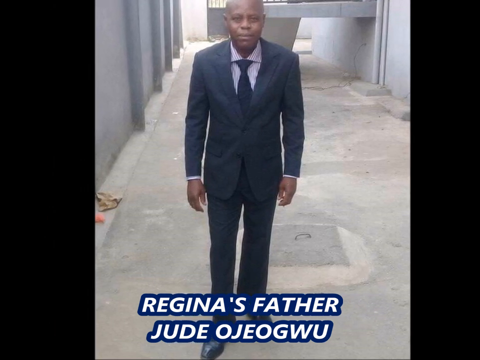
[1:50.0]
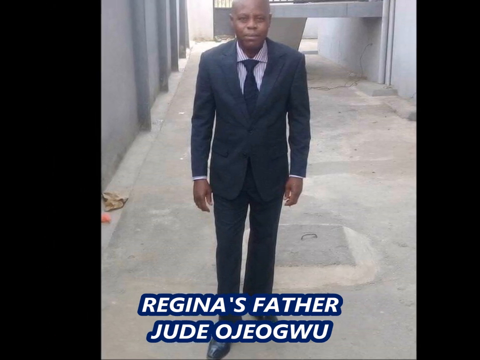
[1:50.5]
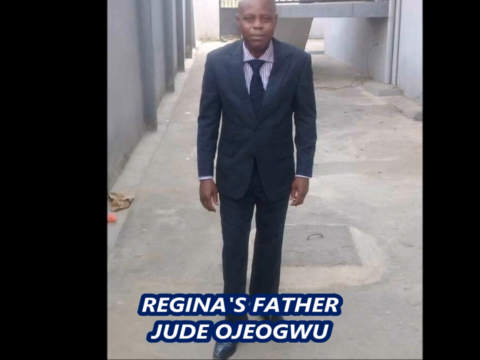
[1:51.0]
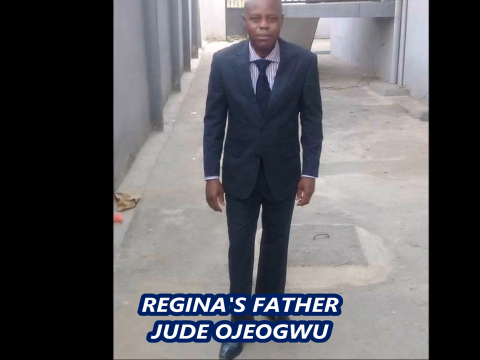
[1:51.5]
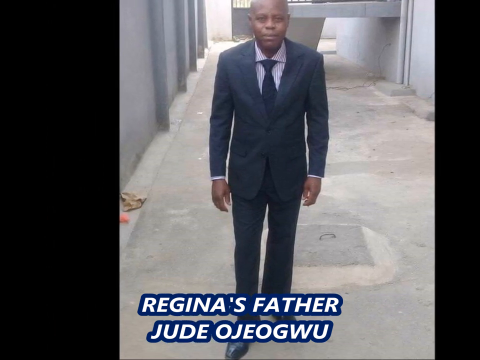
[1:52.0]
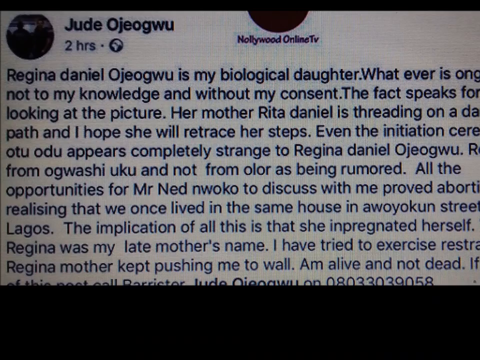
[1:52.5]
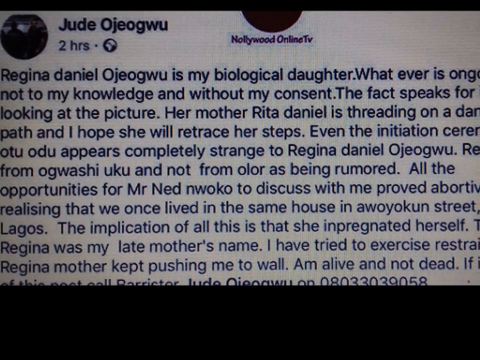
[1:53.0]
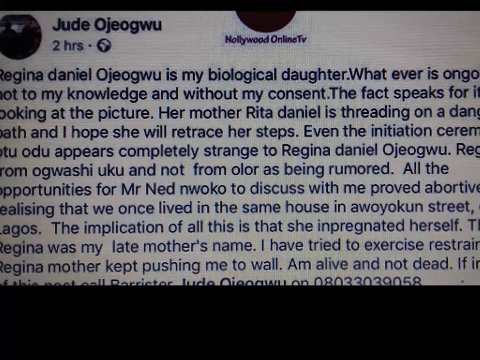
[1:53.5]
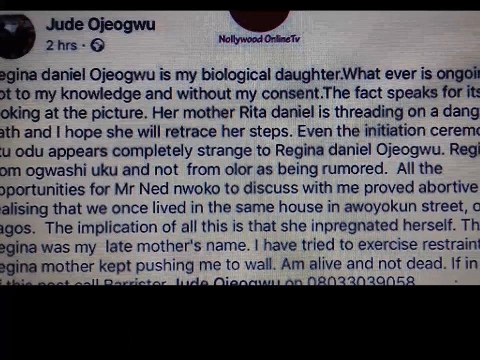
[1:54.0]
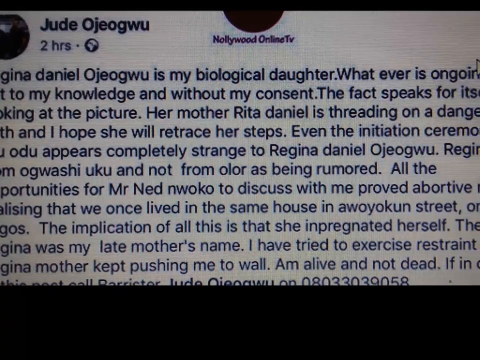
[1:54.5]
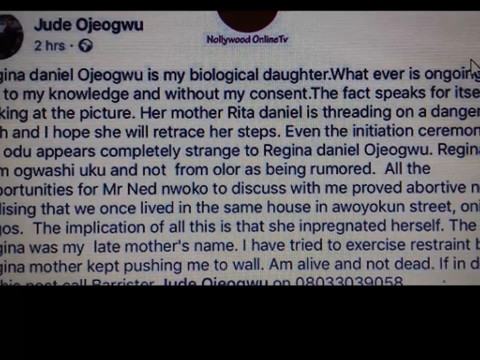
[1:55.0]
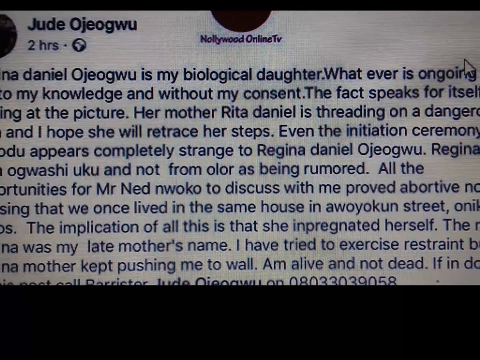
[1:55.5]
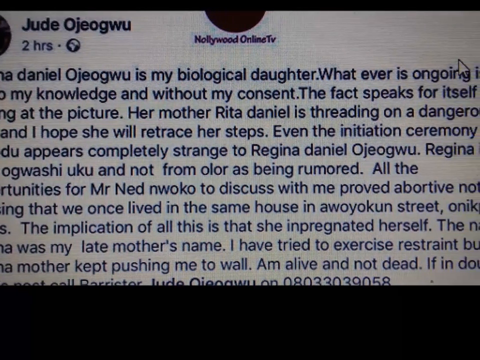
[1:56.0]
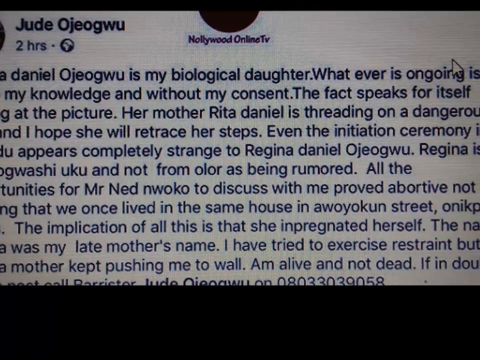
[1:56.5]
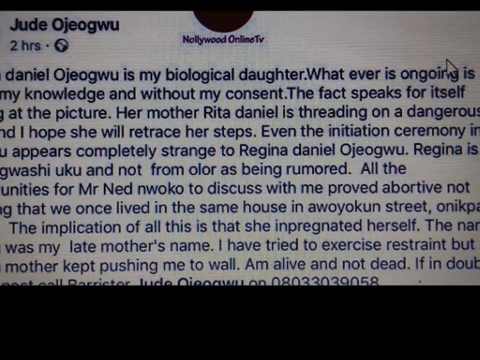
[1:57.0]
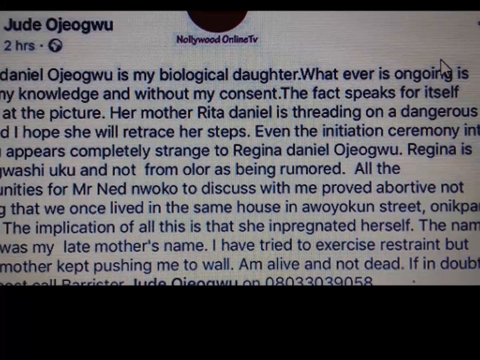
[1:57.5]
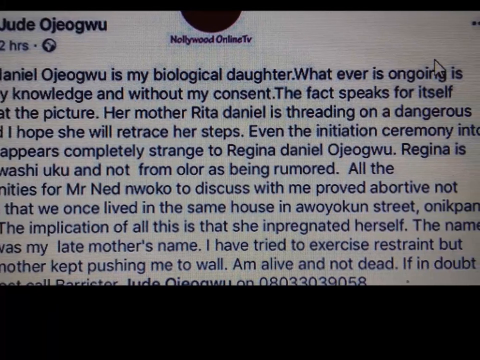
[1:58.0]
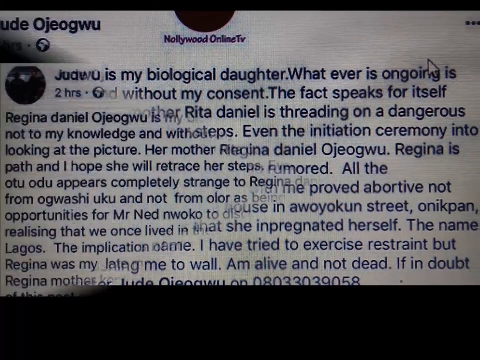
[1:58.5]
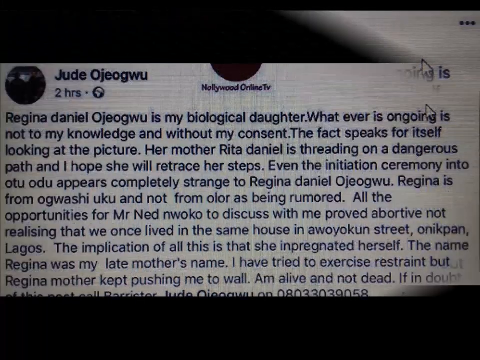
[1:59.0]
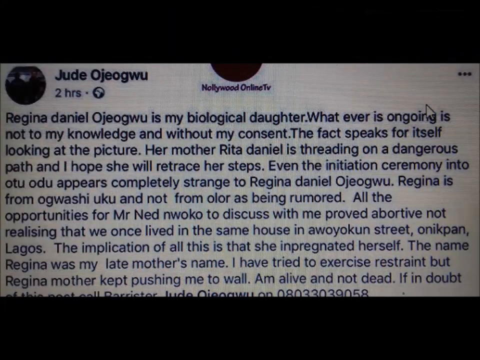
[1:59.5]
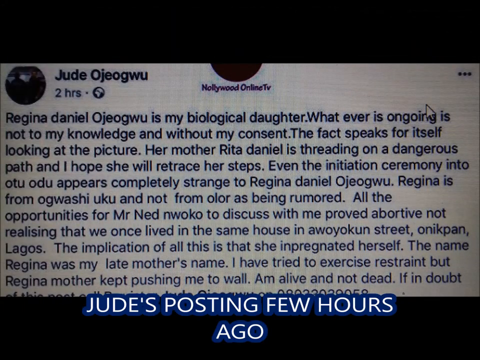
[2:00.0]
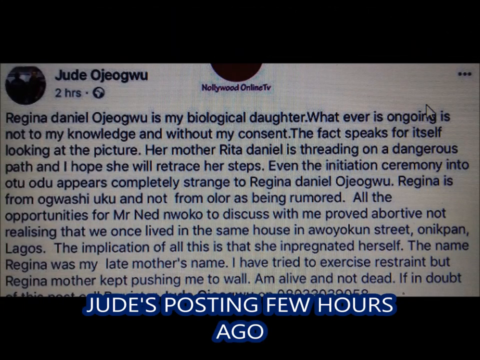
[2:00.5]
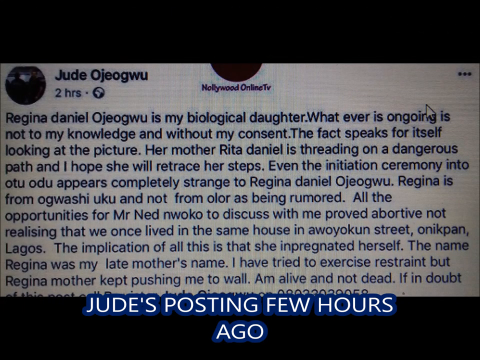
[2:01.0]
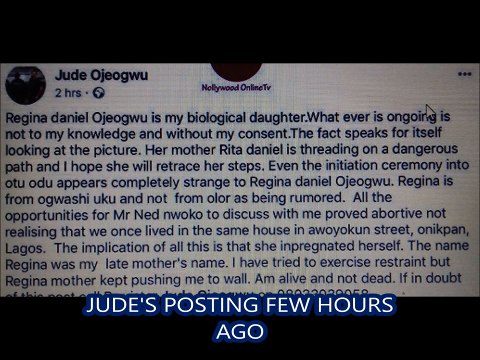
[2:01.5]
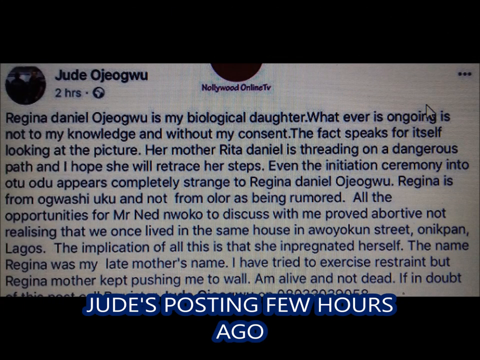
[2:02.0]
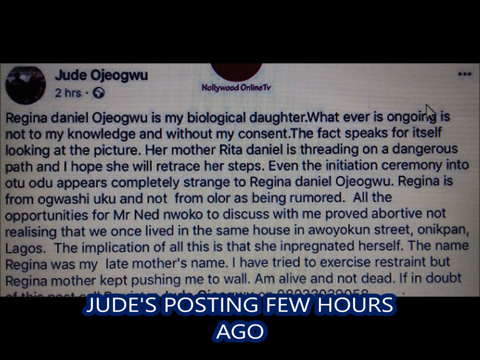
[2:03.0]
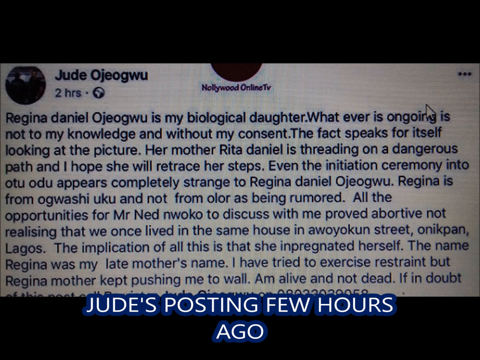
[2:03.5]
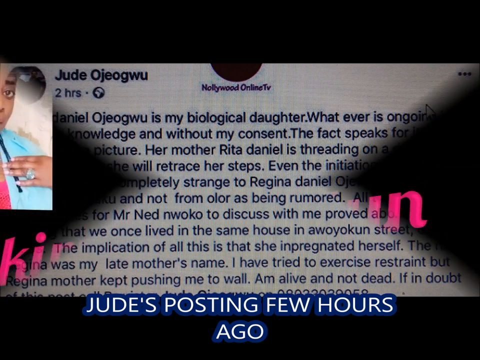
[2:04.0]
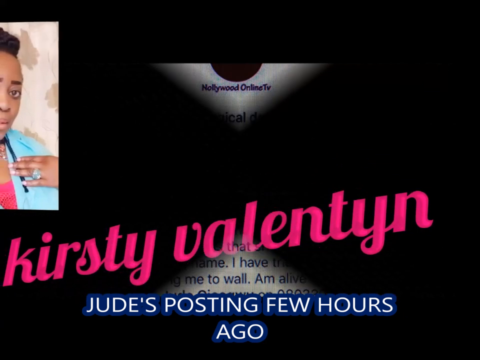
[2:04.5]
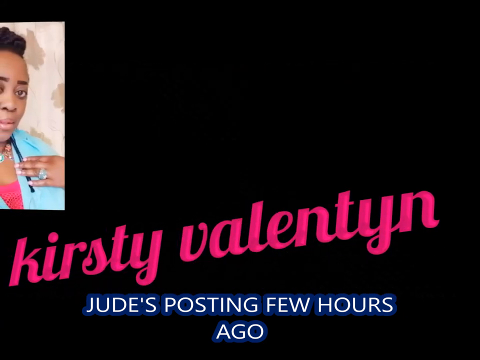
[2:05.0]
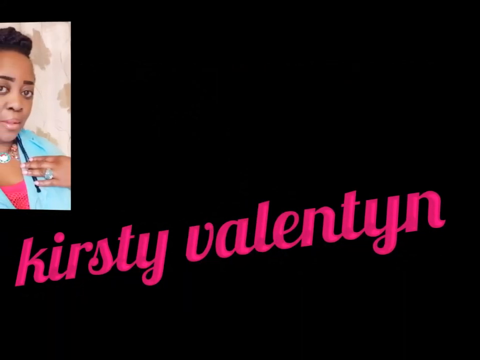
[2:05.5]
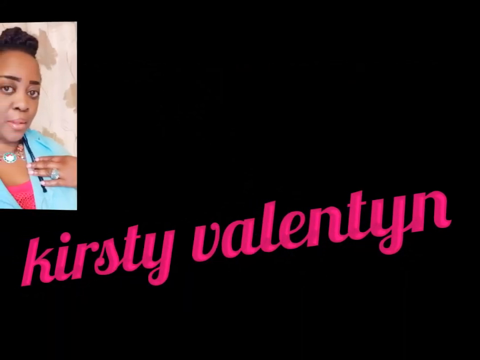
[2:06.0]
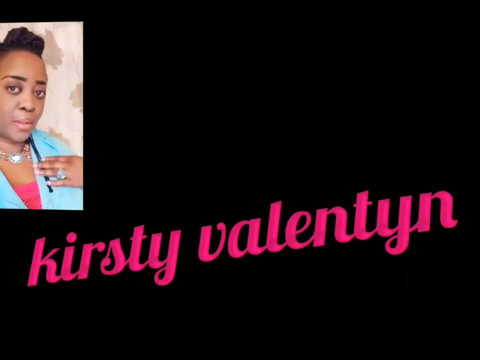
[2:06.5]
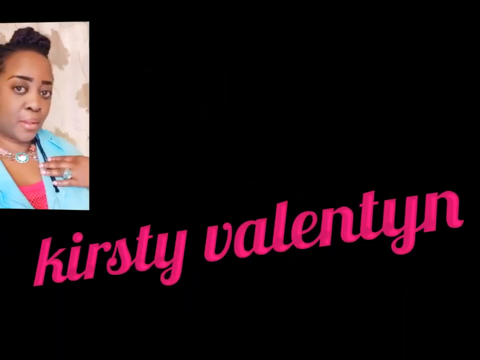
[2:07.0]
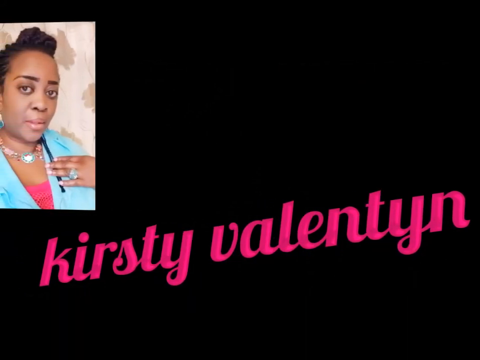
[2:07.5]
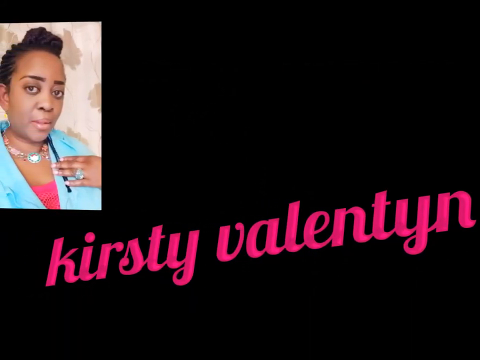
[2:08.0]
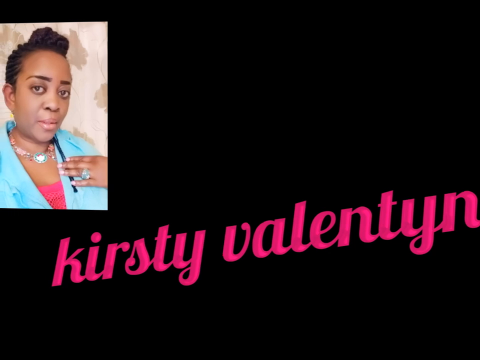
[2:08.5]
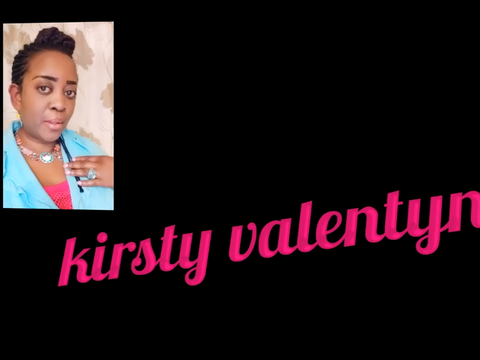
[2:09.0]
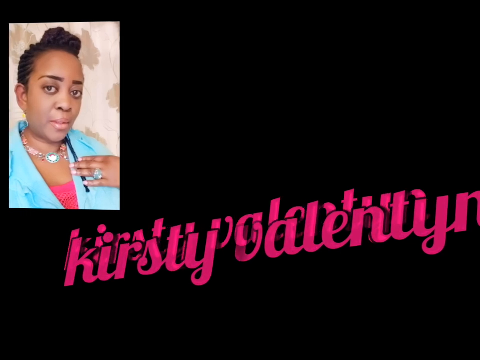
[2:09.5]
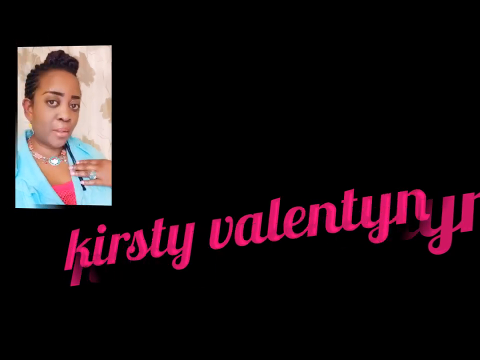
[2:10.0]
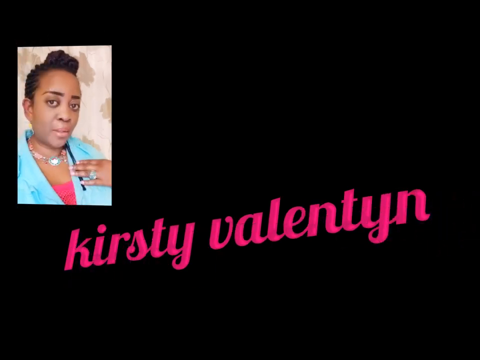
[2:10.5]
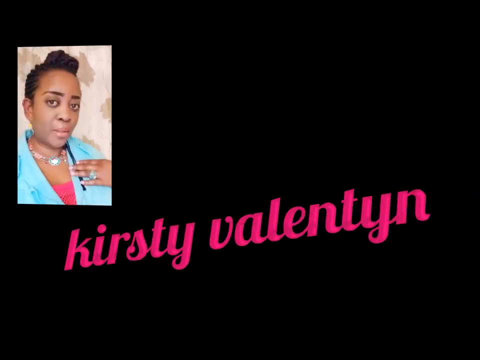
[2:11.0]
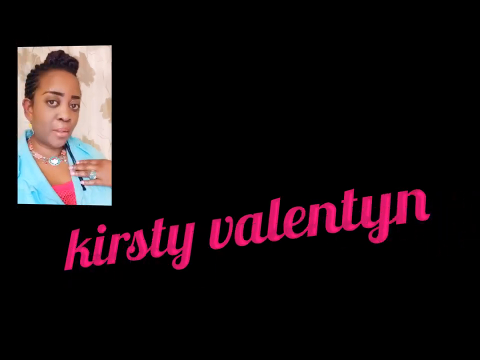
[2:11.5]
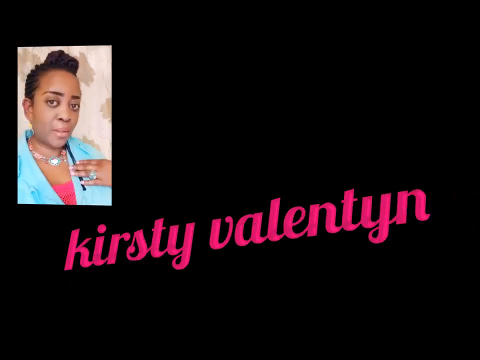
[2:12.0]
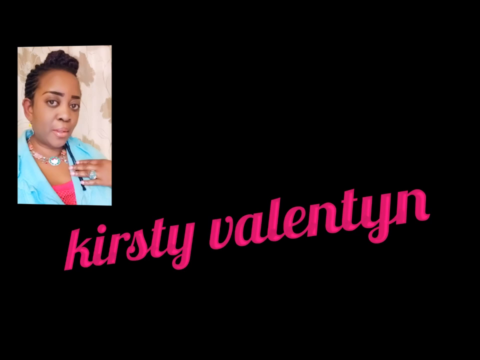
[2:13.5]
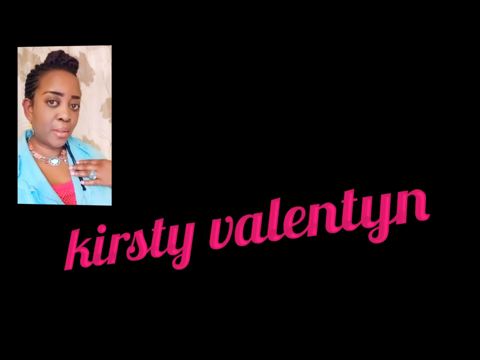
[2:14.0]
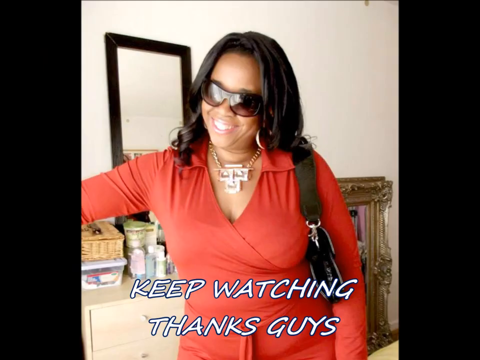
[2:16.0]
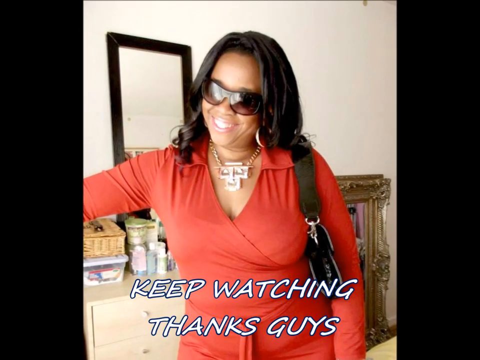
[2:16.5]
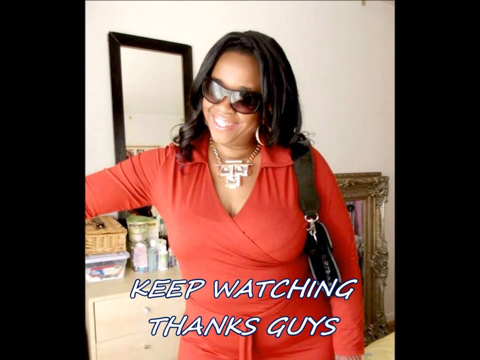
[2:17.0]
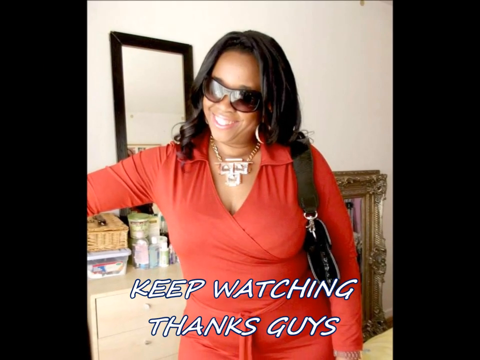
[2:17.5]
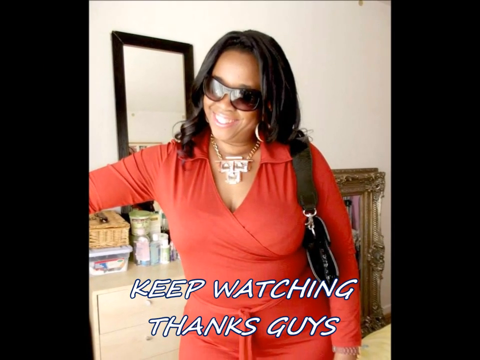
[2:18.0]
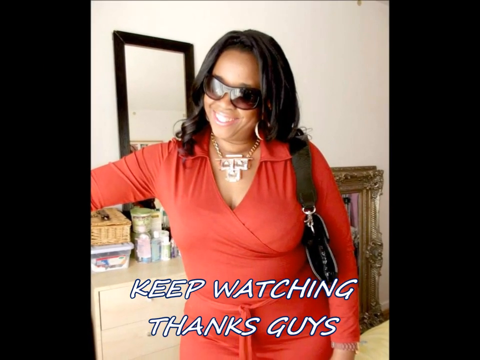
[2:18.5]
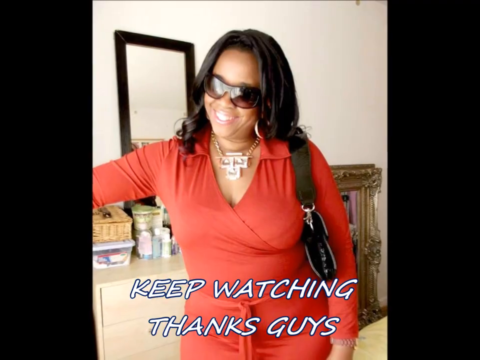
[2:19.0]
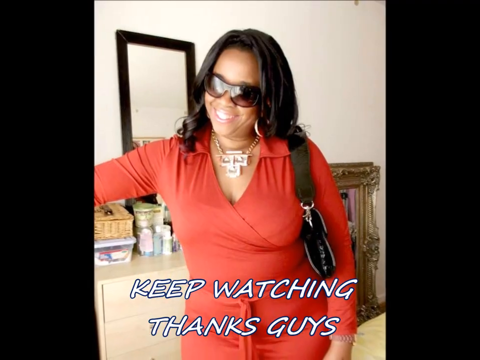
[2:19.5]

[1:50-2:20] Regina Daniels' dad, Jude Ojiogwu, stands in his compound wearing a black suit and a tie, seemingly posing for a picture. After that comes a write-up from him, credited to Nollywood Online TV, reading "Regina Daniel Ojiogwu is my biological daughter whatever is ongoing is unknown to my knowledge and without my consent the fact speaks for itself." It continues with lines including "is treading on a dangerous path and I hope she will retrace her steps", "Even the initiation ceremony appears completely strange to Regina Daniel Ojiogwu" and "All the opportunities for Mr. Nedmoku to discuss with me proved abortive", and a mobile number for Jude Ojiogwu is shown. Text also states "Jude's posting few hours ago".